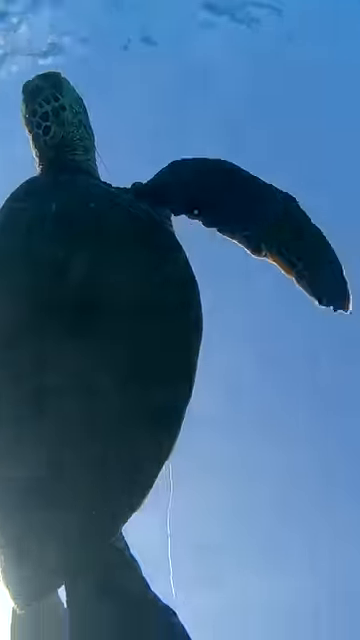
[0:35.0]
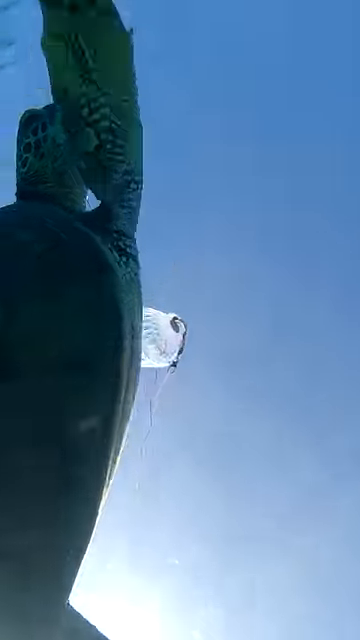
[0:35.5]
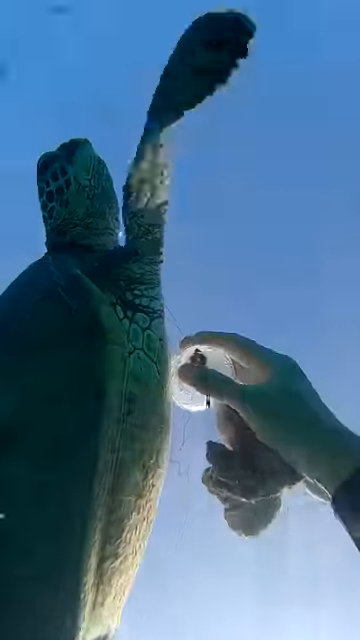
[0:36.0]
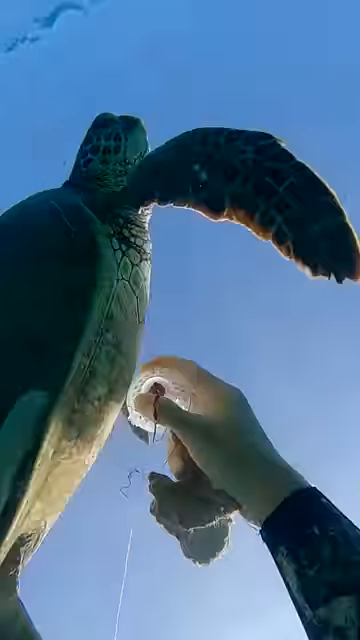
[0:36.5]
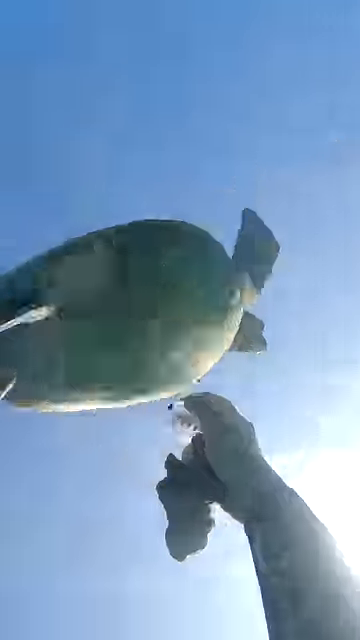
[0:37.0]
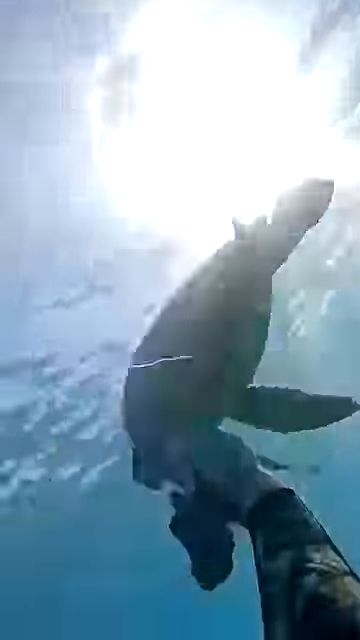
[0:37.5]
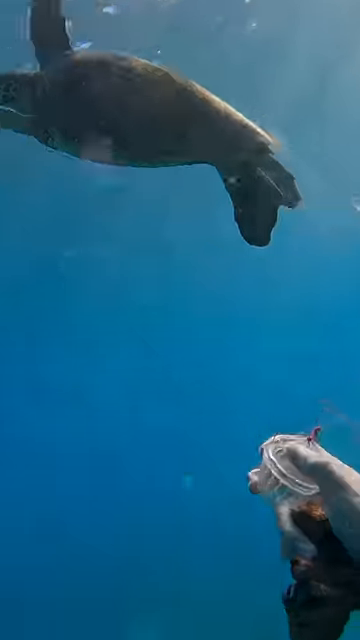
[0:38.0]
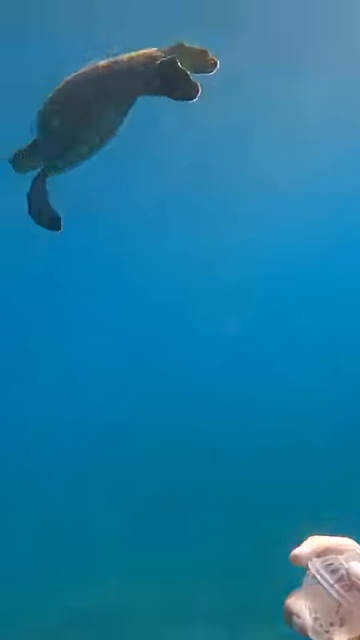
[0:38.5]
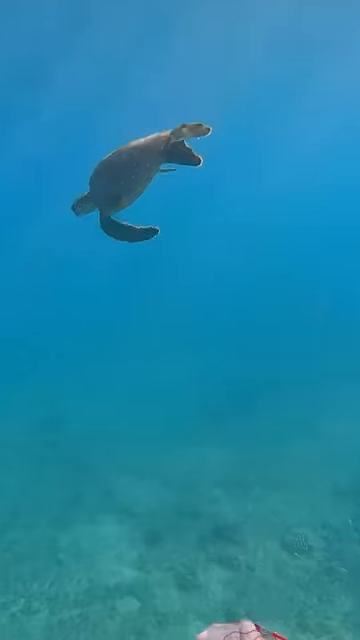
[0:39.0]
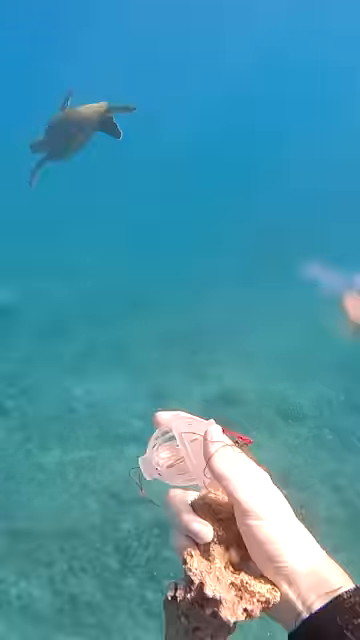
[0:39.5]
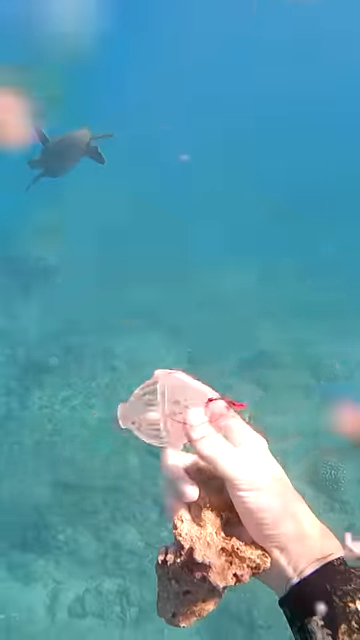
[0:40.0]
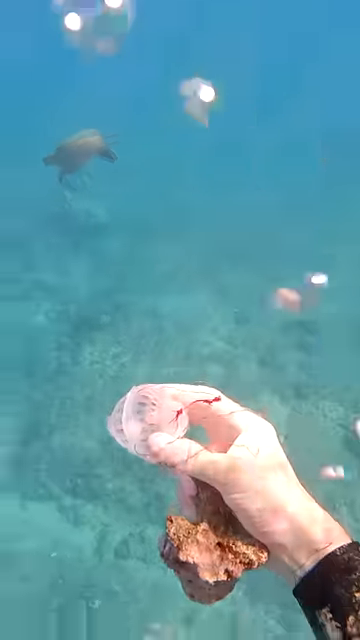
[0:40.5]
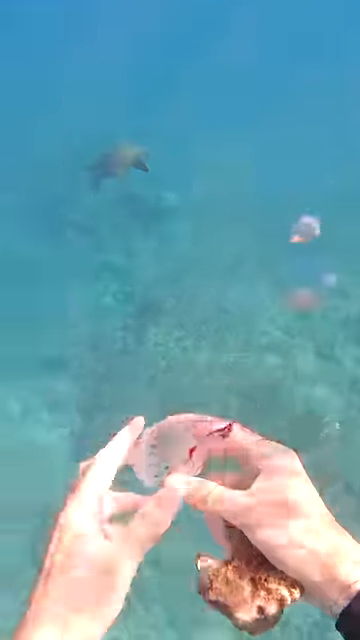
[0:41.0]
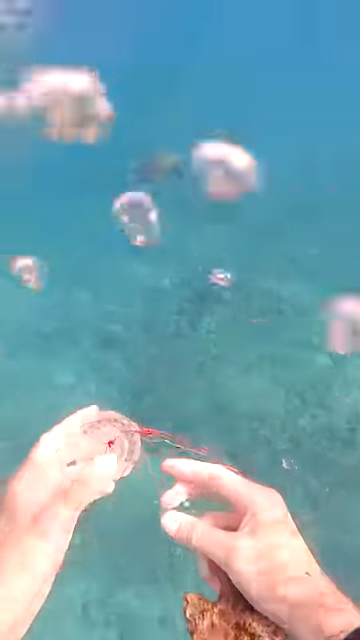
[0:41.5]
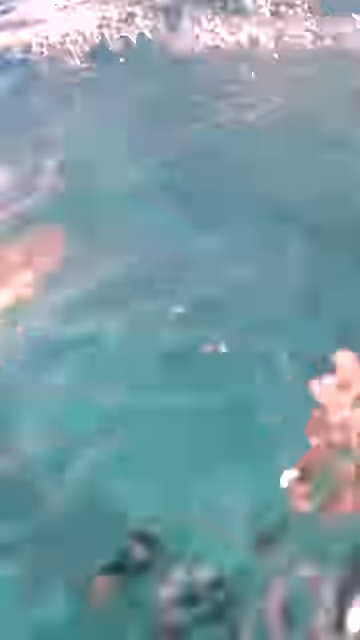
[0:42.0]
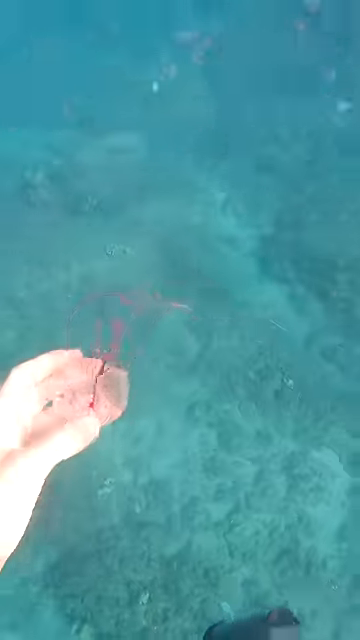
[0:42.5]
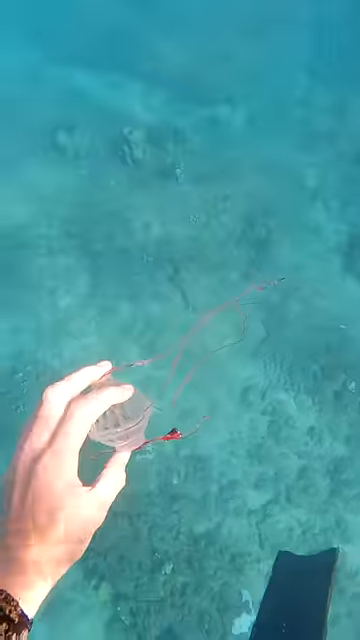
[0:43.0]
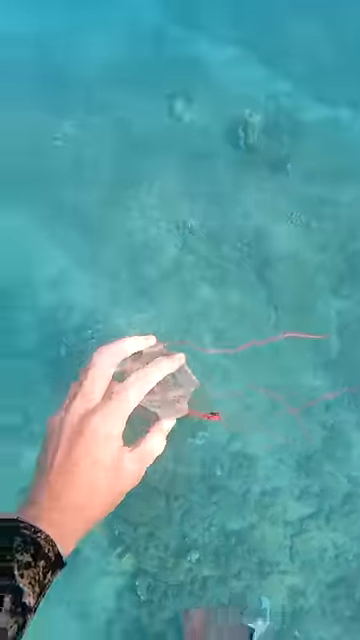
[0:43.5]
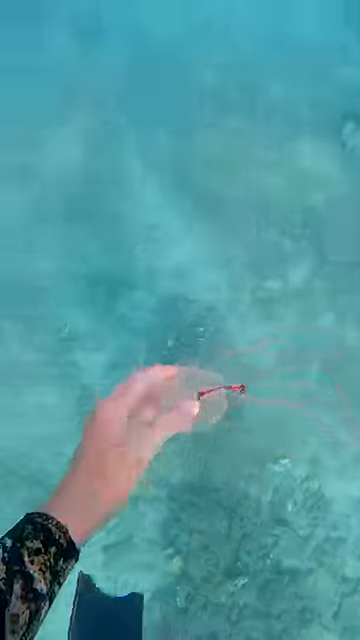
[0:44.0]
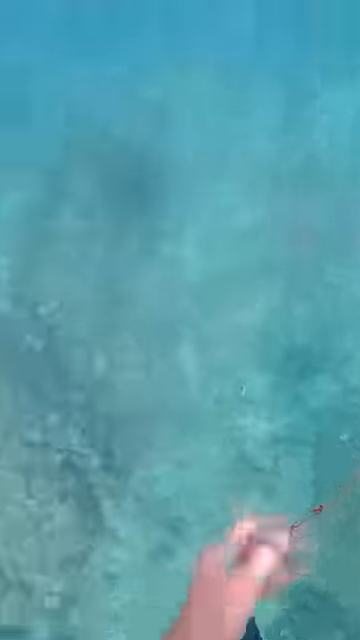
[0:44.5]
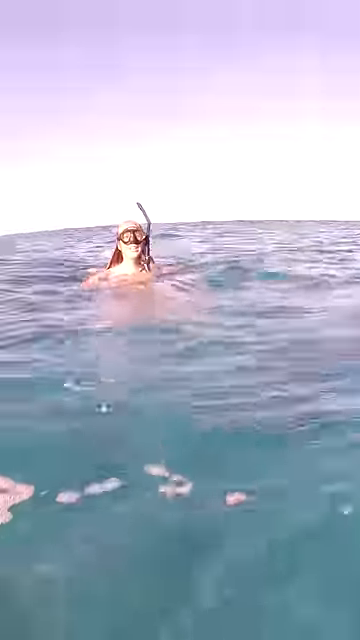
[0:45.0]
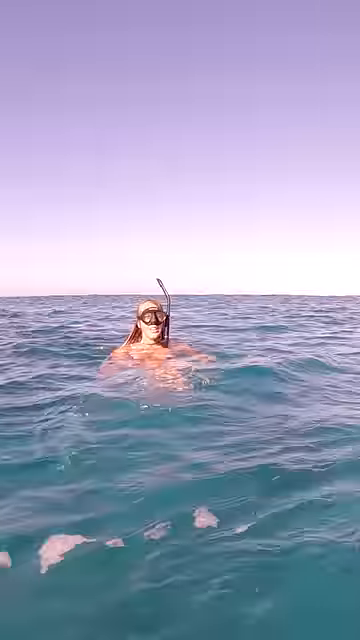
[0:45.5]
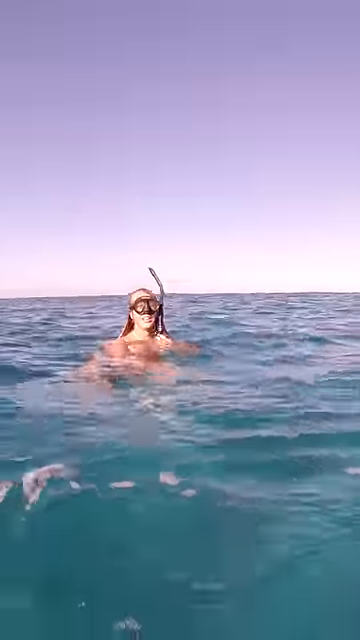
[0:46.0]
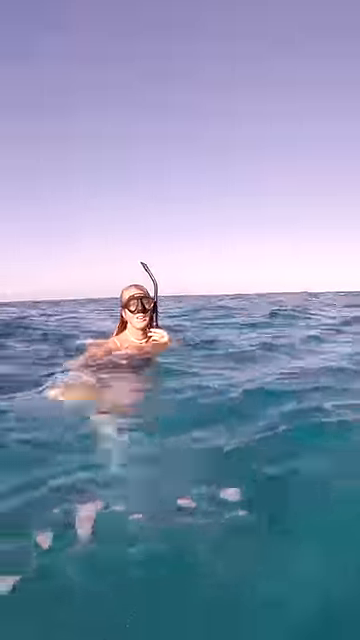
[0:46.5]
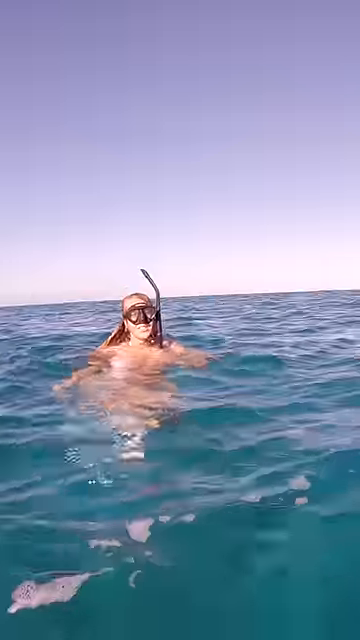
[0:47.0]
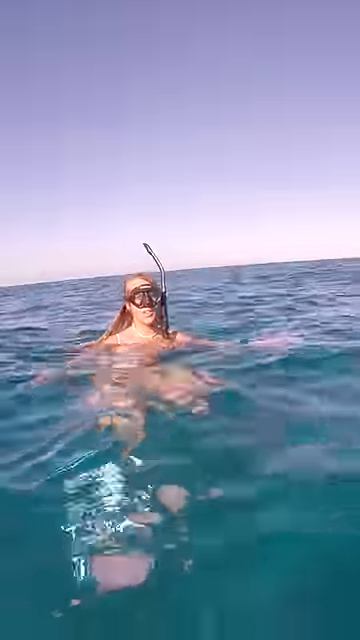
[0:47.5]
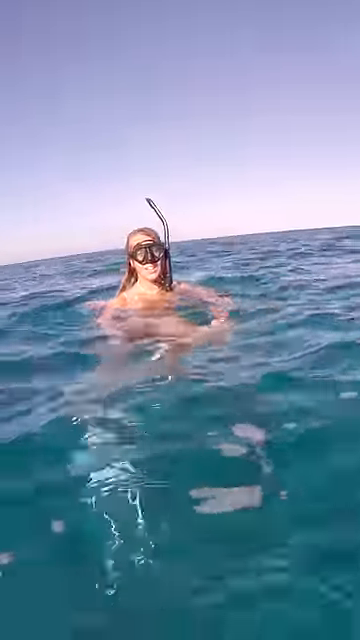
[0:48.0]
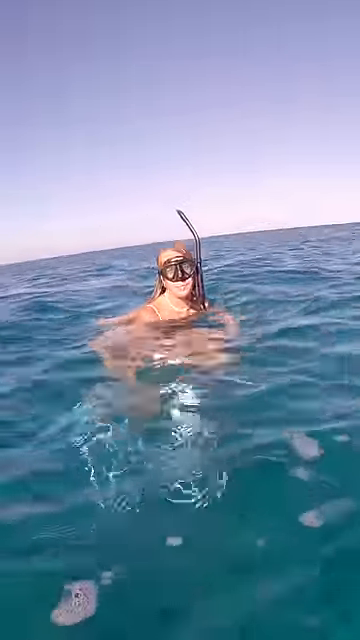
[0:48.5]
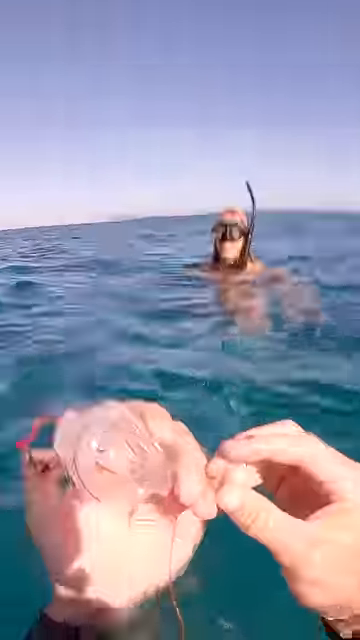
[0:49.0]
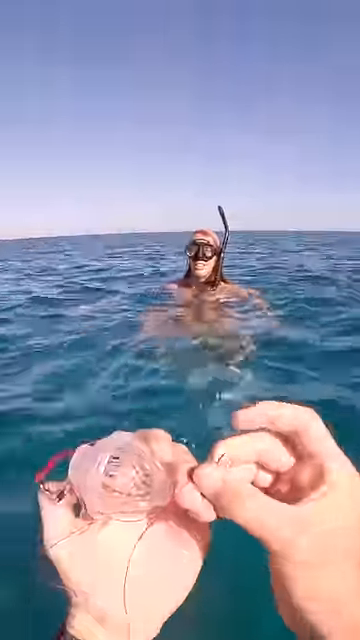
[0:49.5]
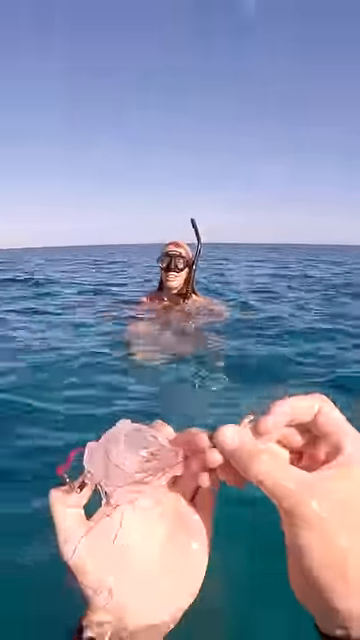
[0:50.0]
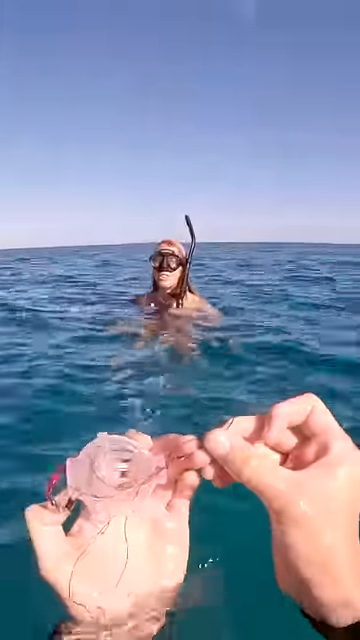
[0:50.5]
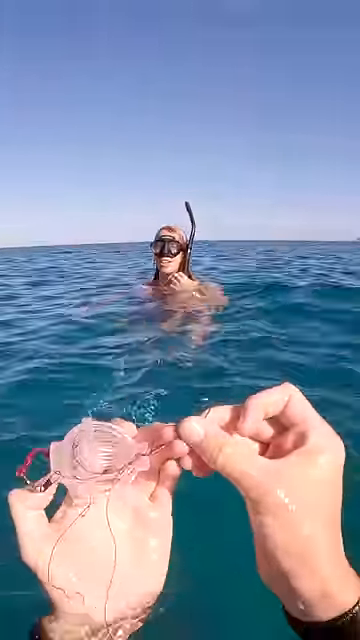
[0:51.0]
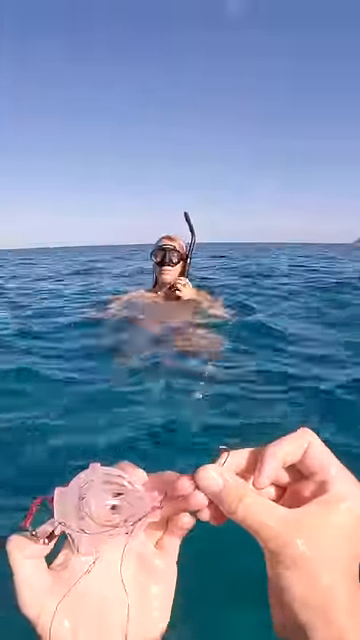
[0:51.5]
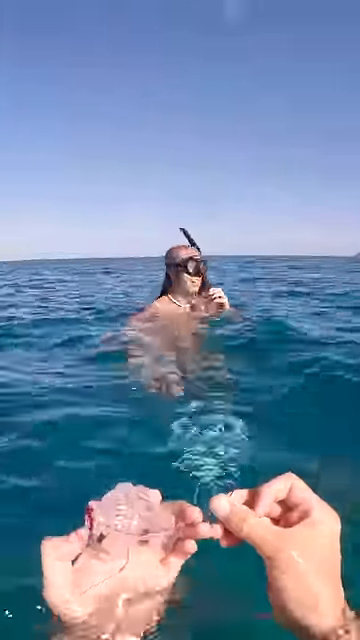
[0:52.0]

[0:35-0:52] A couple of snorkelers swim in the ocean. Underwater, they appear to encounter a sea turtle moving along the bottom of the ocean. An object appears to be attached to the turtle and does not appear to be a naturally occurring part of its body. One of the snorkelers removes the object from the turtle, and as it comes off, the turtle moves very swiftly away from the snorkeler. The filmer then rises above the water and shows the companion snorkeler the item that was removed from the sea turtle.